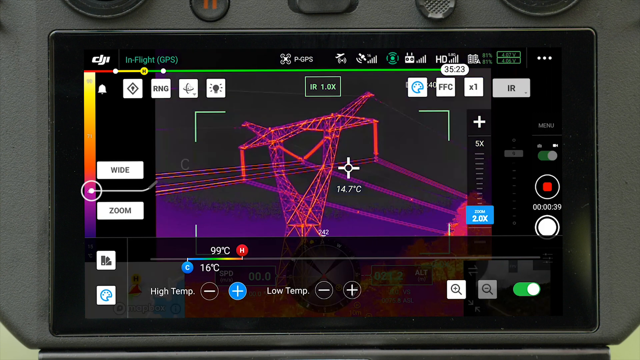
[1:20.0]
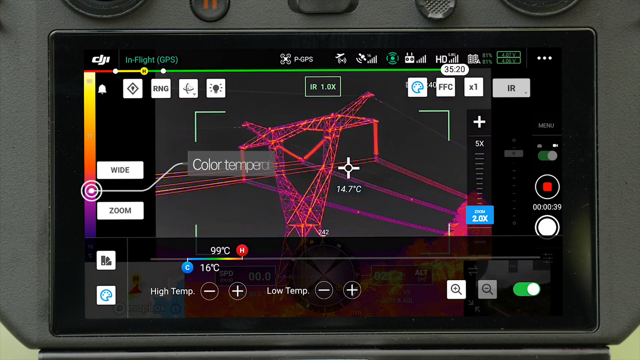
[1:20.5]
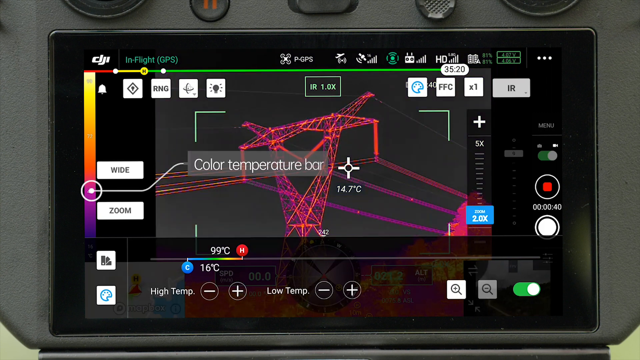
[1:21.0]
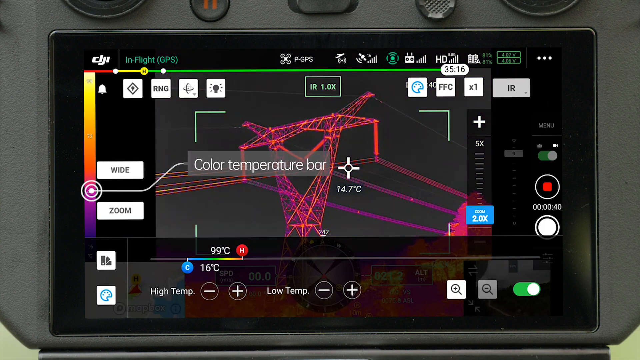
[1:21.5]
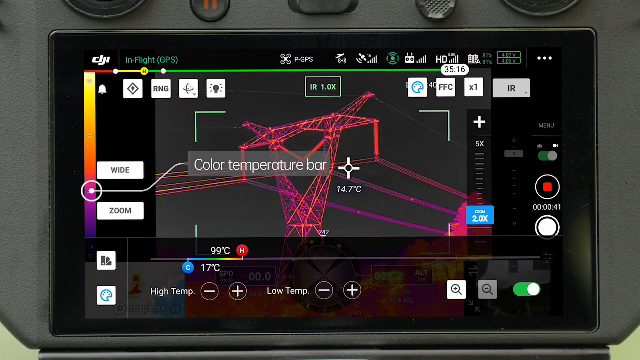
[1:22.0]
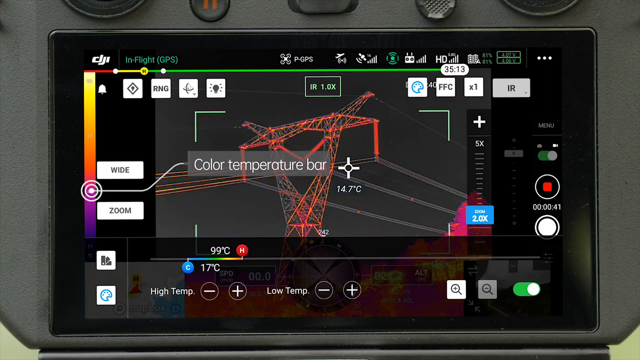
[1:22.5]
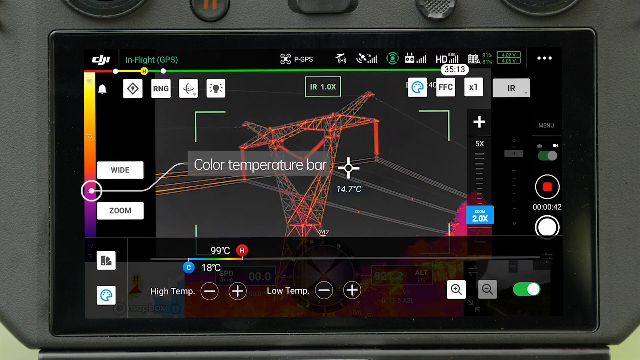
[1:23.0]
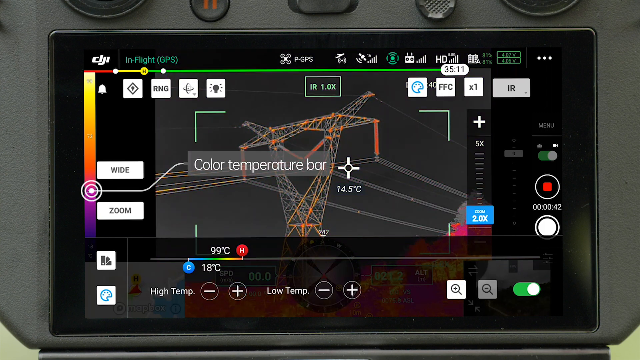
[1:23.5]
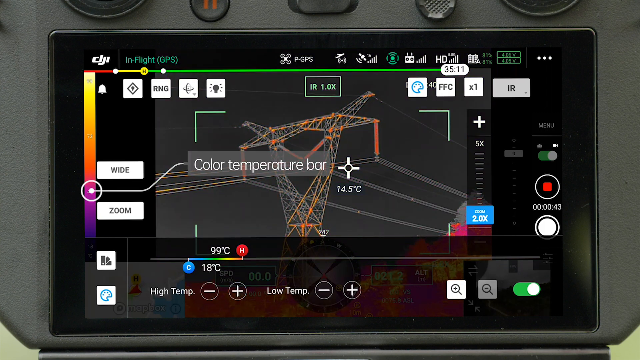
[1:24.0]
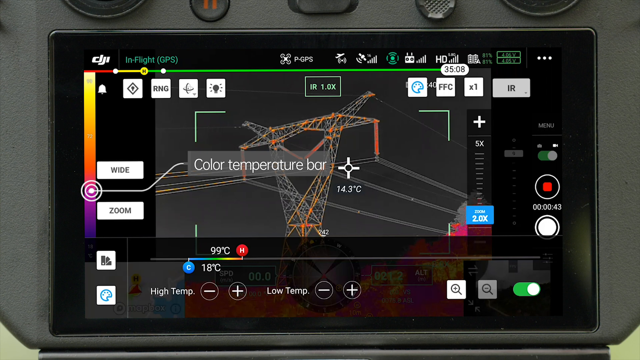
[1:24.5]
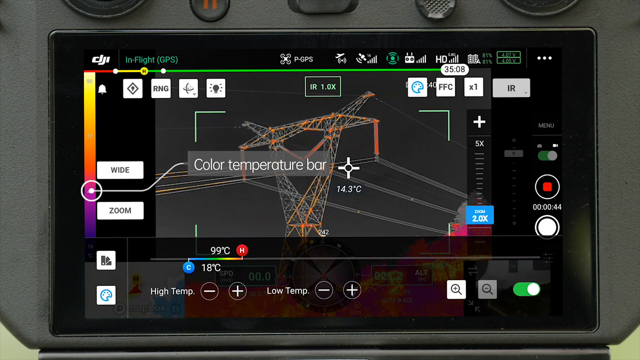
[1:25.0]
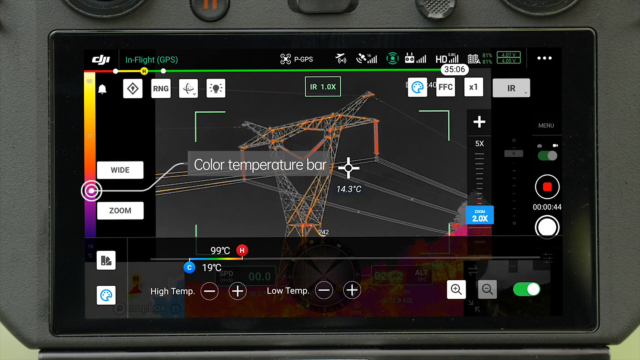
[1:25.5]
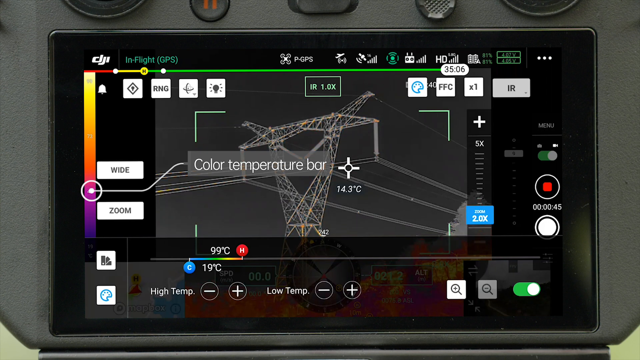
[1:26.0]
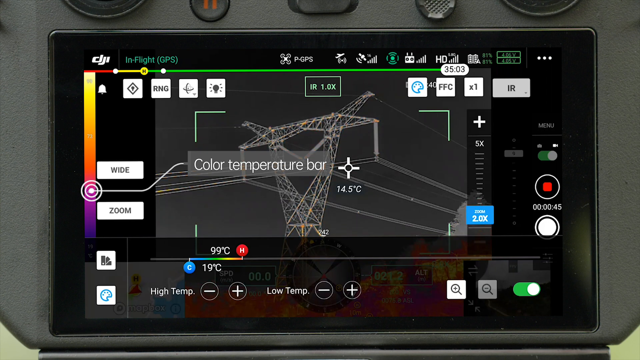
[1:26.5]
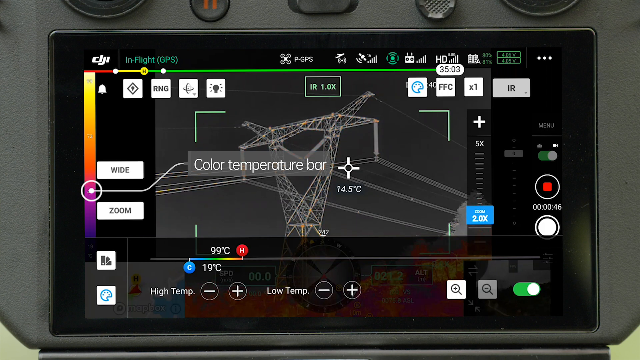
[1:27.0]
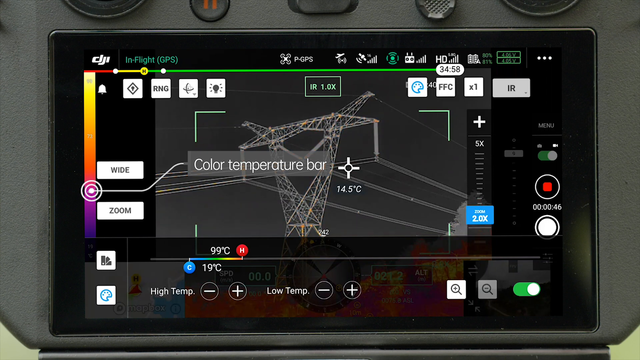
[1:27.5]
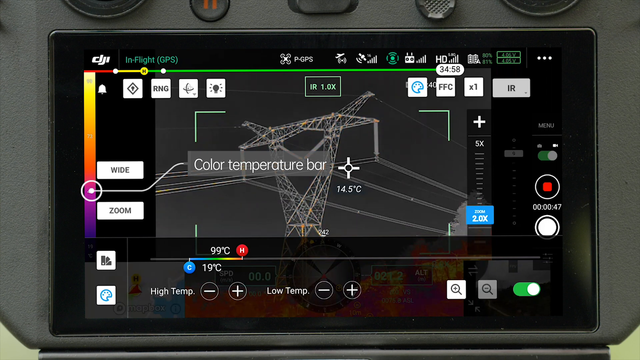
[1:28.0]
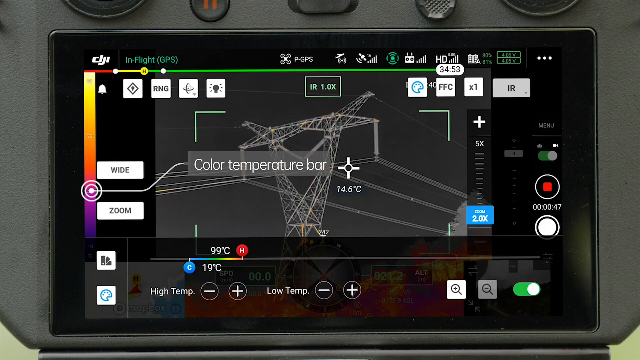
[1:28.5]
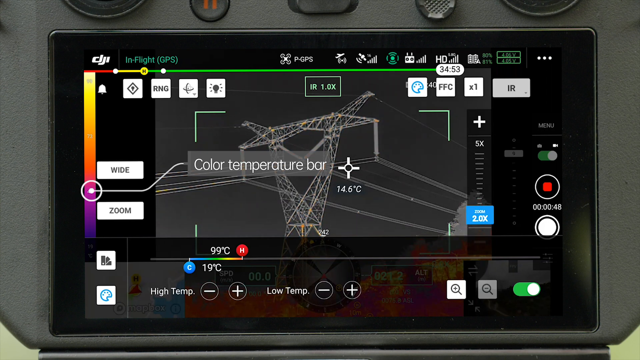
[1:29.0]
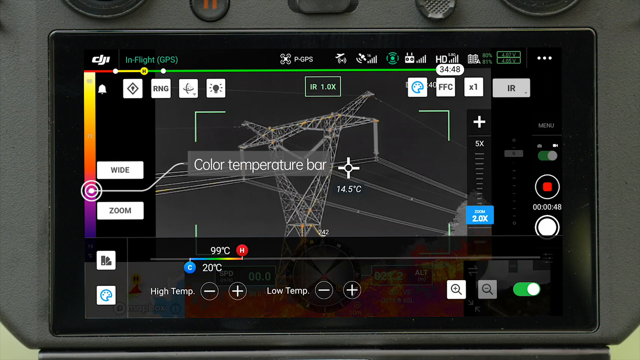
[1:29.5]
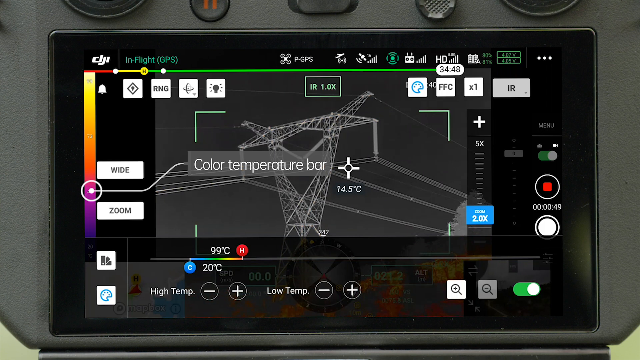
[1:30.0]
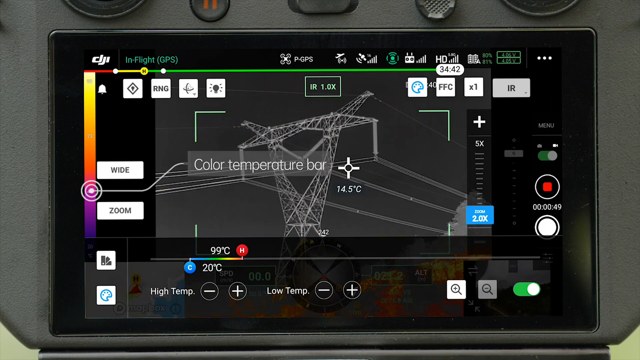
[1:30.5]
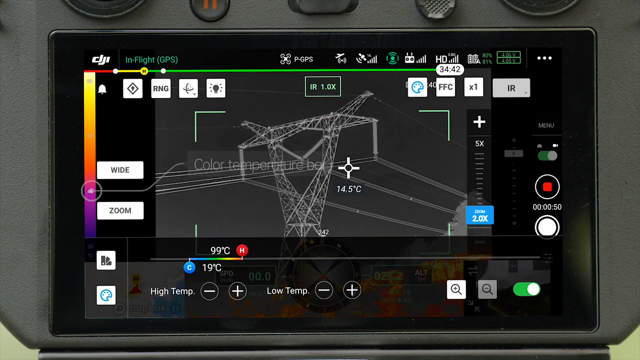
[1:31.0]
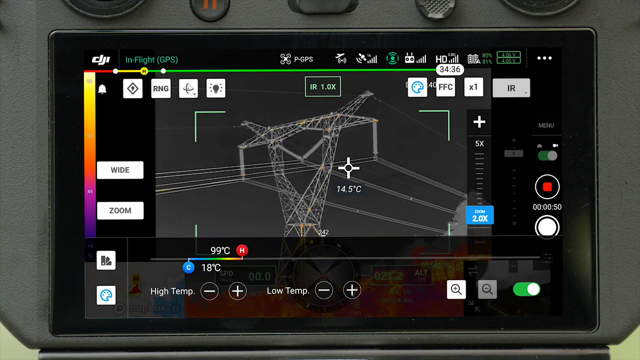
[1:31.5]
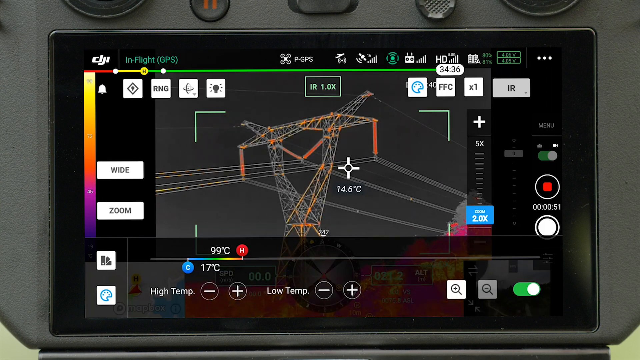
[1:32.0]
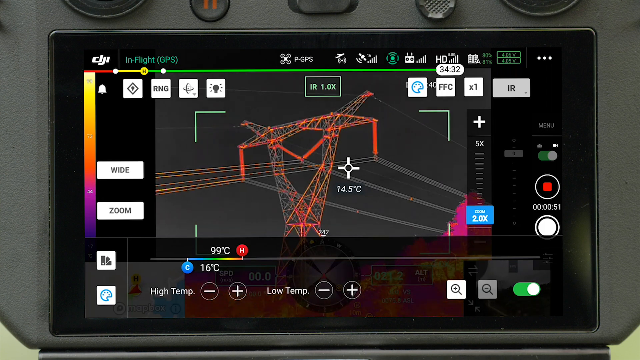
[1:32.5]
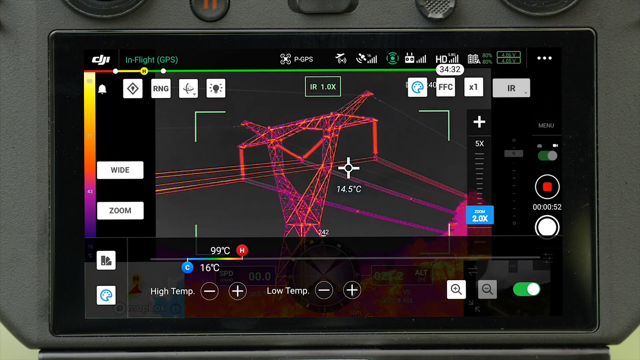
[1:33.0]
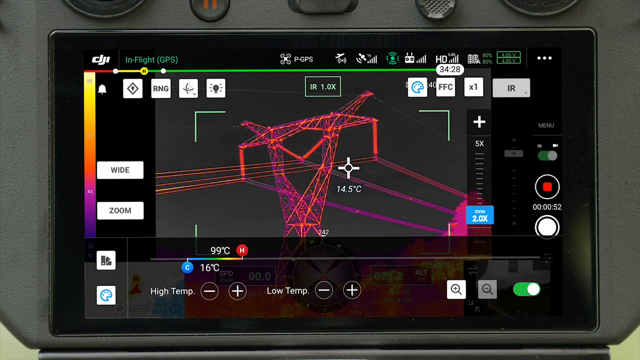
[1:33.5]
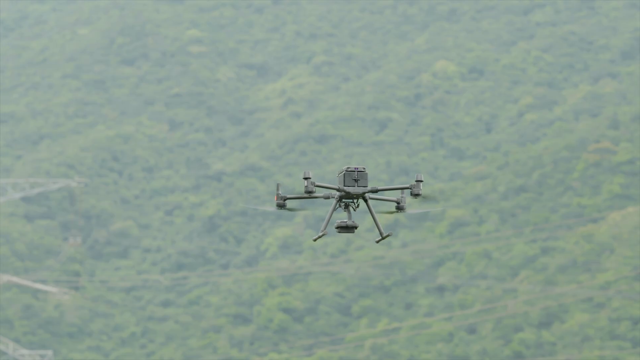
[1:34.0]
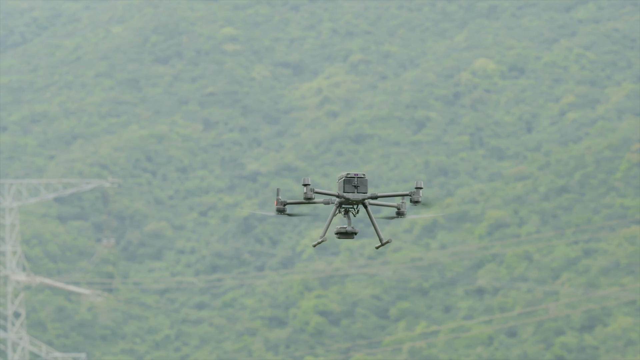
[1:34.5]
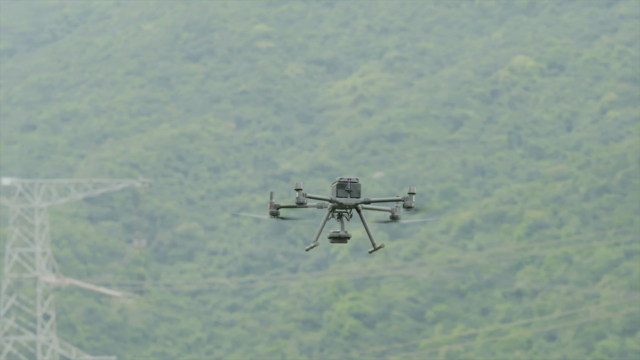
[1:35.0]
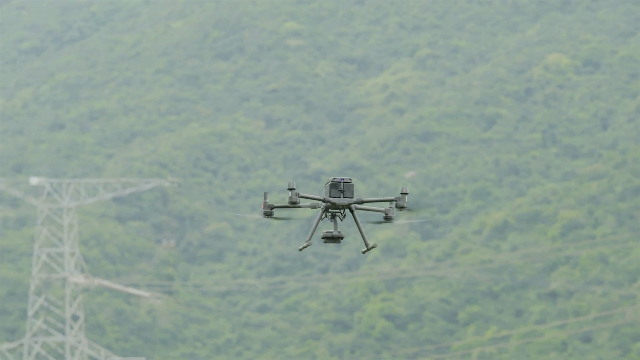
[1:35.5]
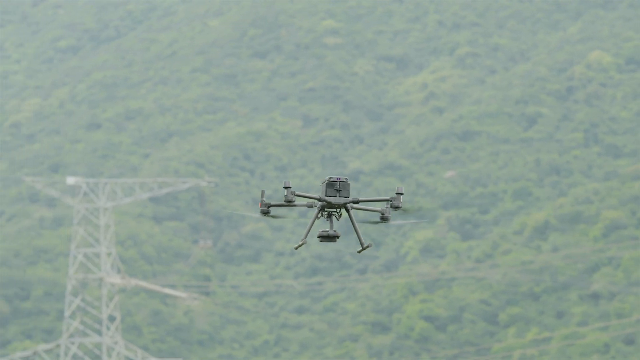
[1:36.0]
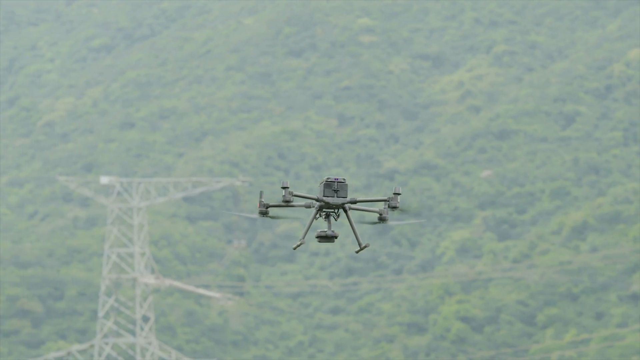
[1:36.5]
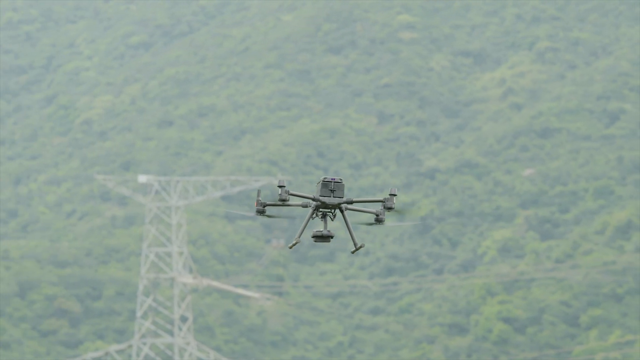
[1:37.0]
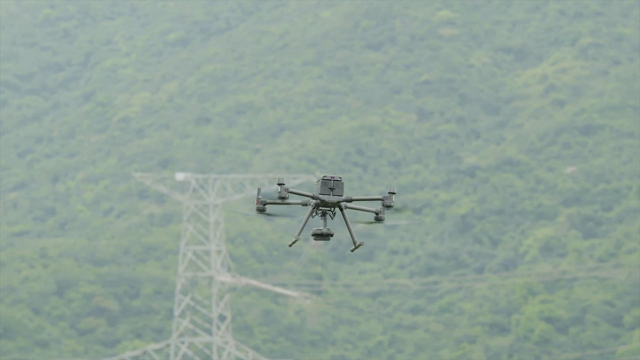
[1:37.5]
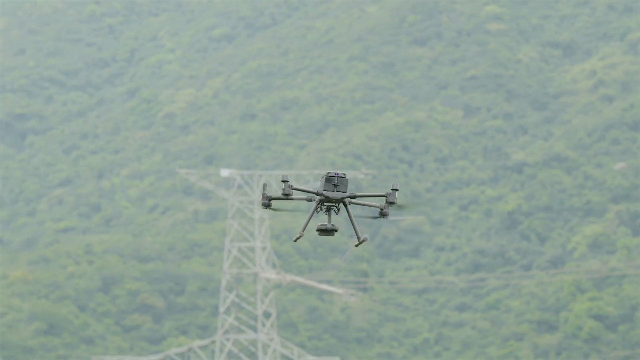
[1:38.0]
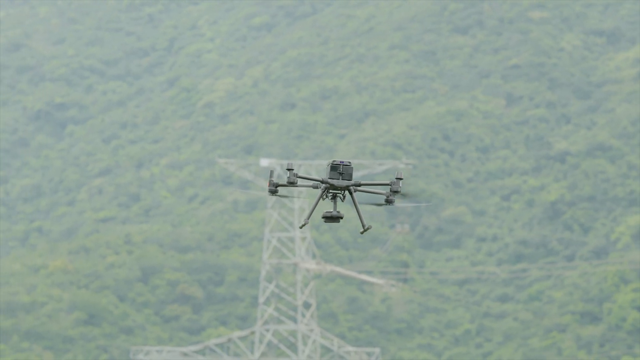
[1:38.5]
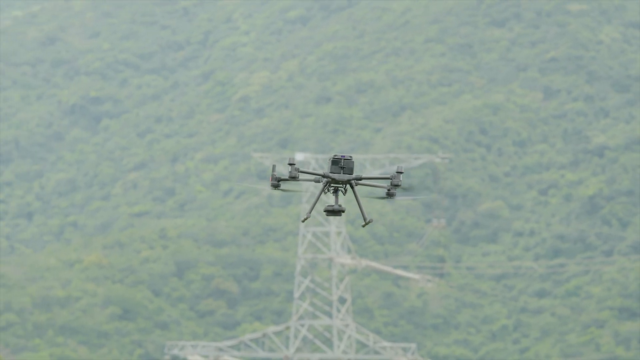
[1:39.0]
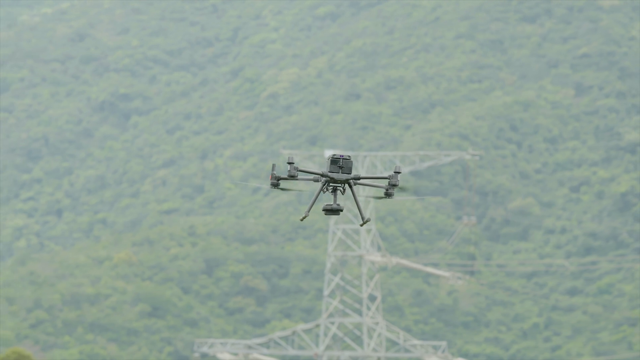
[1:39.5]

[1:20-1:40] A close-up shows the screen again, with just the edges of the remote control visible. A box is highlighted. The bottom third of the screen is translucent black. At the bottom left is the palette image in a white box. To its right is "high temp" with minus and plus buttons, then "low temp" with minus and plus buttons. Further right is a magnifying glass with a plus in it, highlighted in white, and to its right a magnifying glass with a minus in it, greyed out. To the right of that is a green switch button with a white dot. The scene then changes to an image of the drone hovering in the sky.